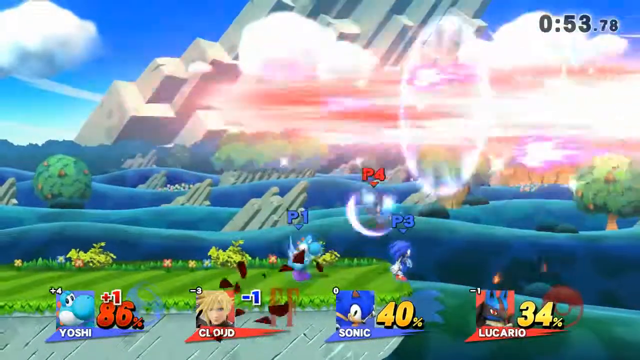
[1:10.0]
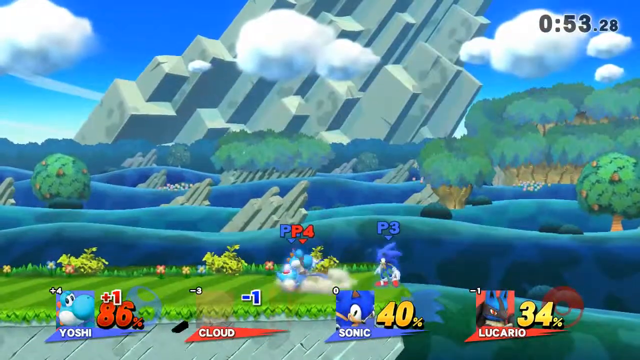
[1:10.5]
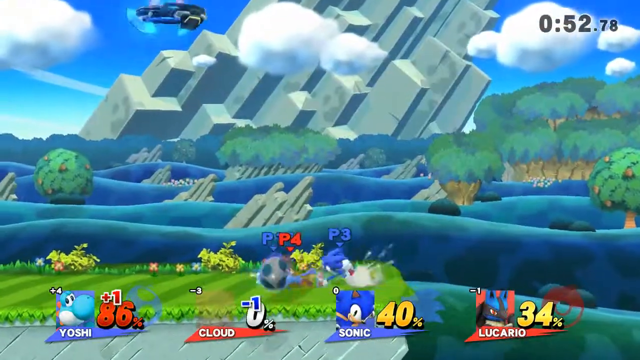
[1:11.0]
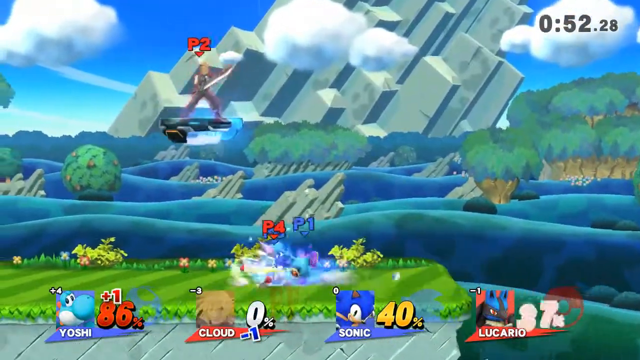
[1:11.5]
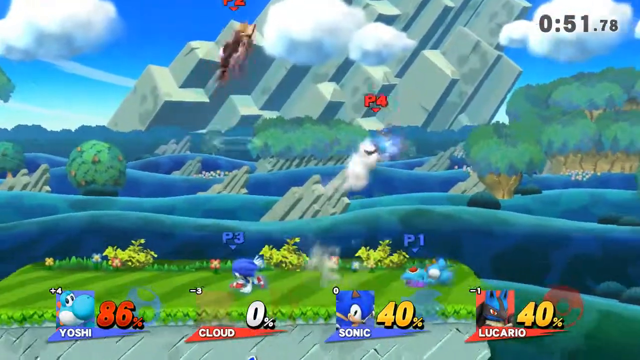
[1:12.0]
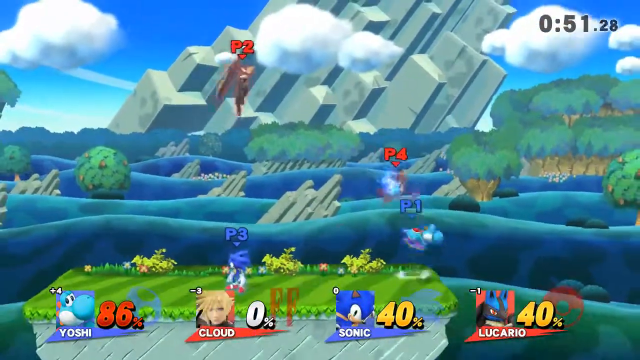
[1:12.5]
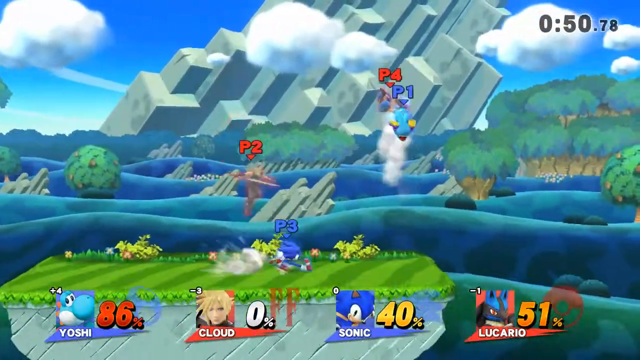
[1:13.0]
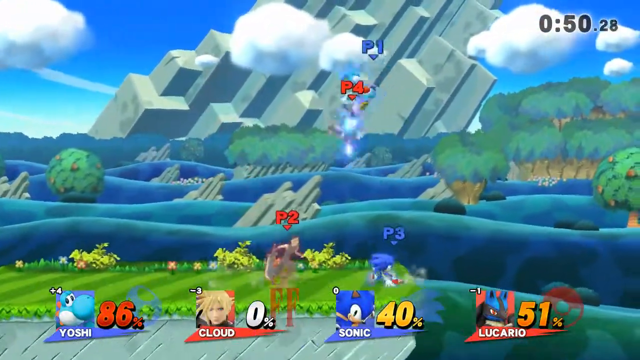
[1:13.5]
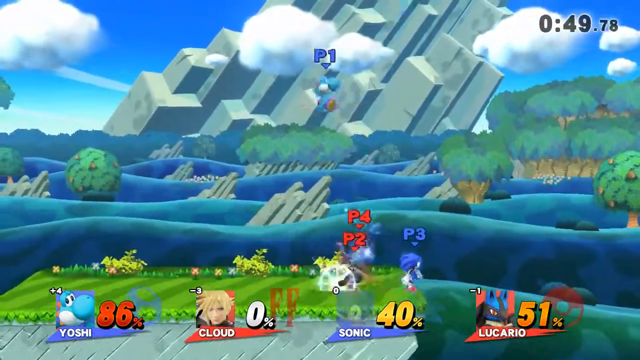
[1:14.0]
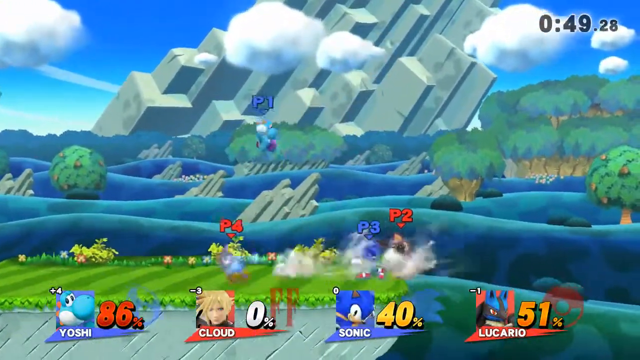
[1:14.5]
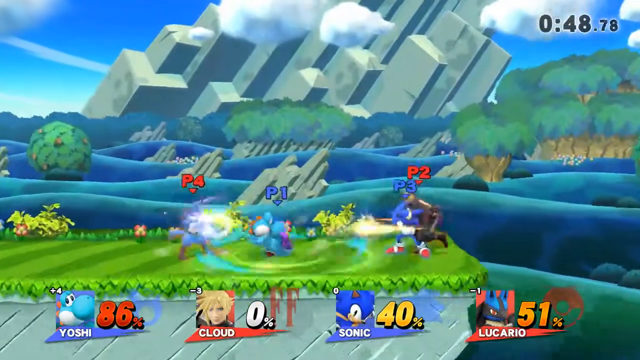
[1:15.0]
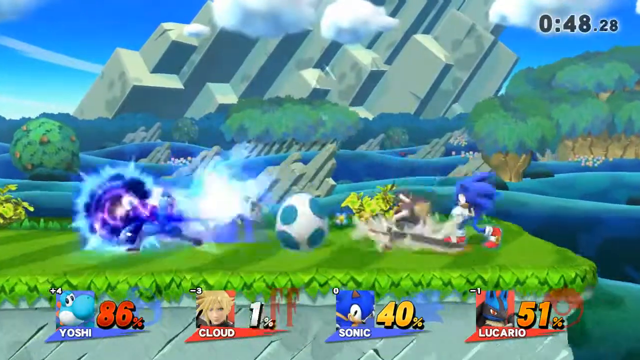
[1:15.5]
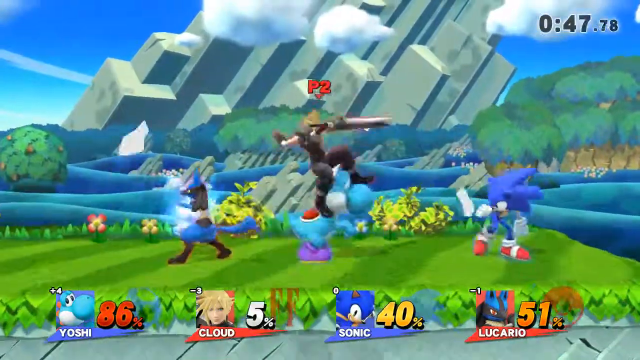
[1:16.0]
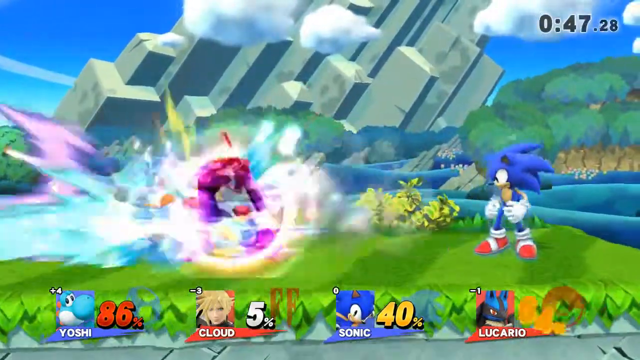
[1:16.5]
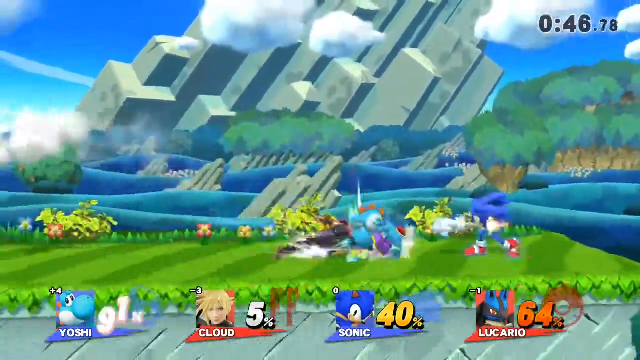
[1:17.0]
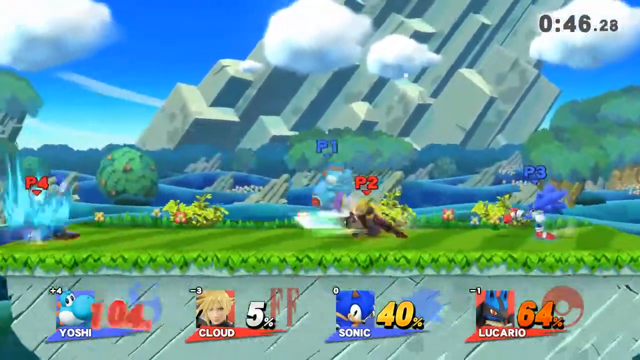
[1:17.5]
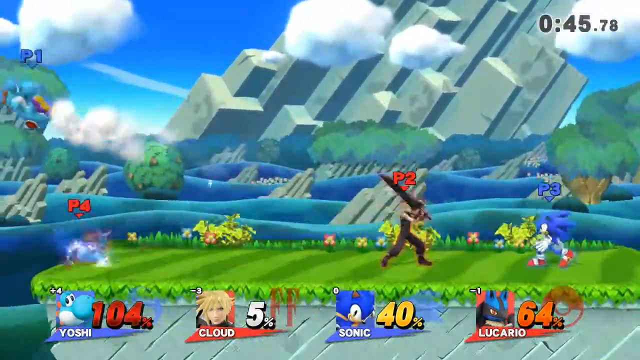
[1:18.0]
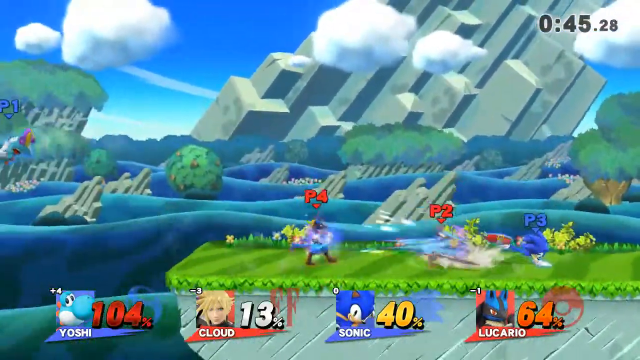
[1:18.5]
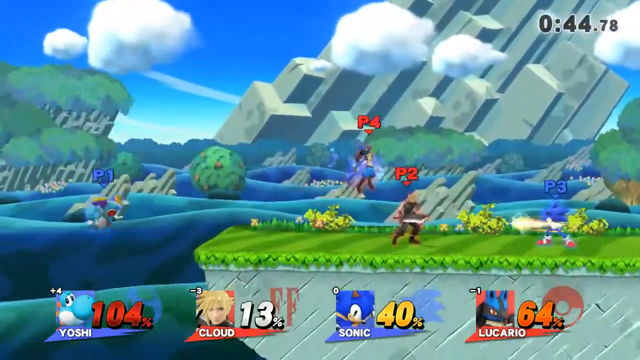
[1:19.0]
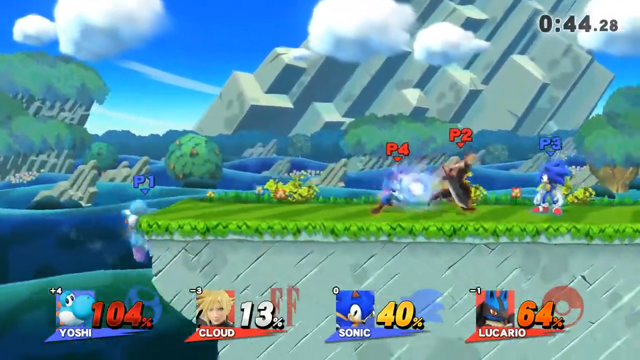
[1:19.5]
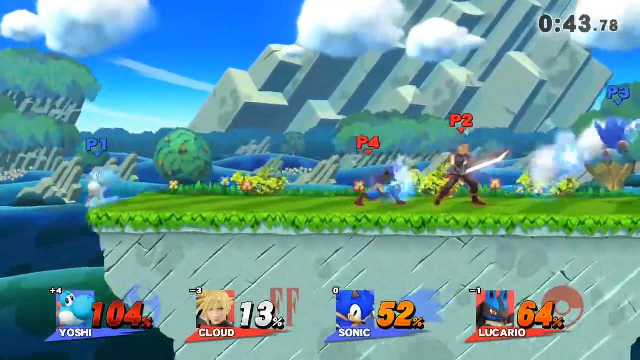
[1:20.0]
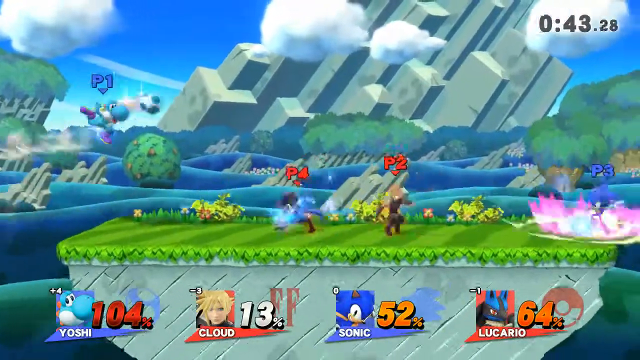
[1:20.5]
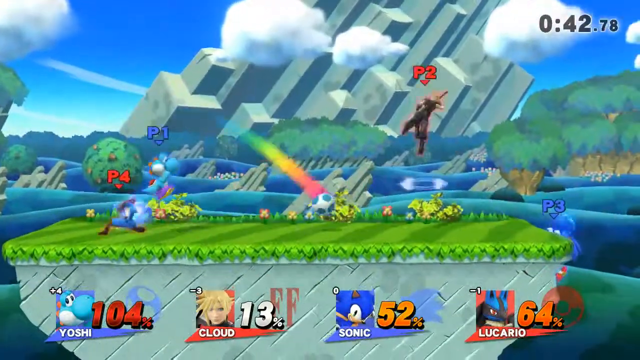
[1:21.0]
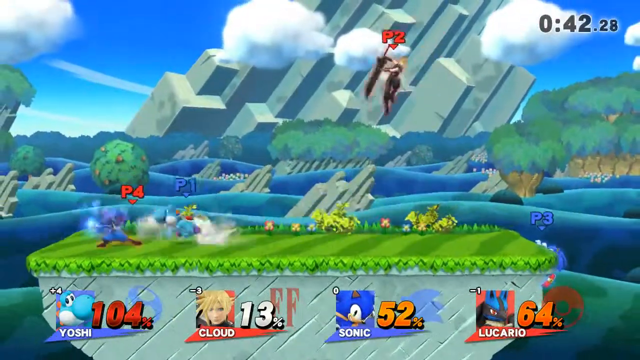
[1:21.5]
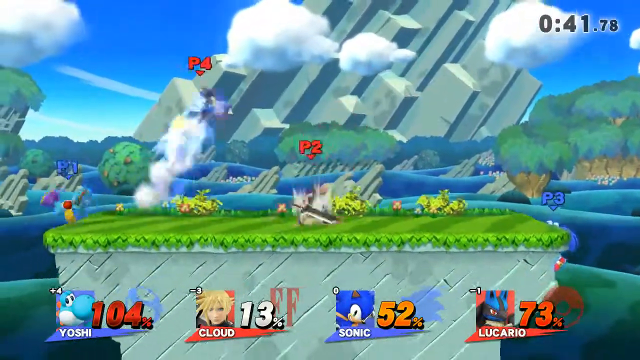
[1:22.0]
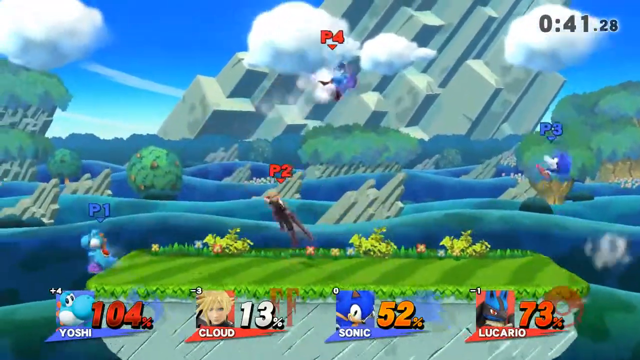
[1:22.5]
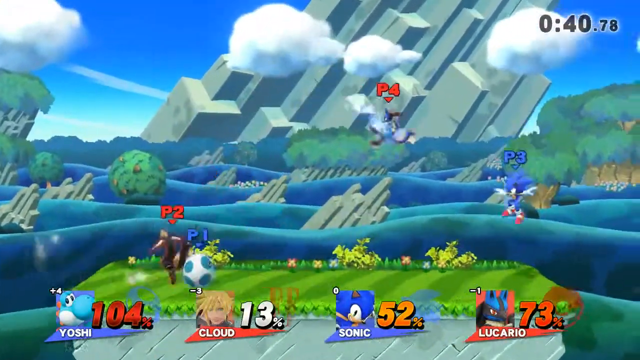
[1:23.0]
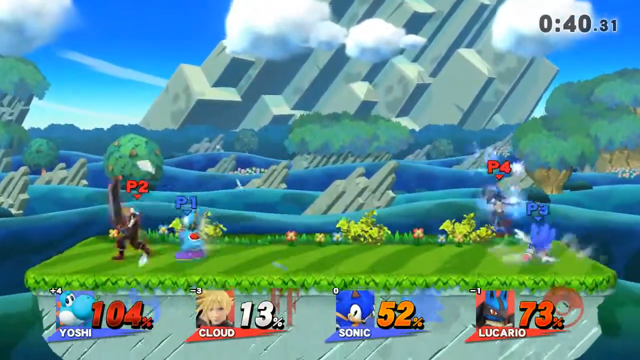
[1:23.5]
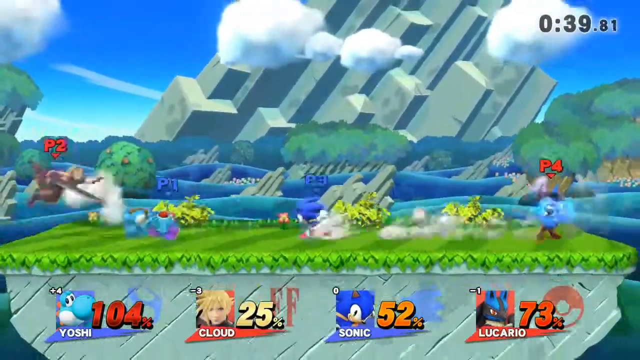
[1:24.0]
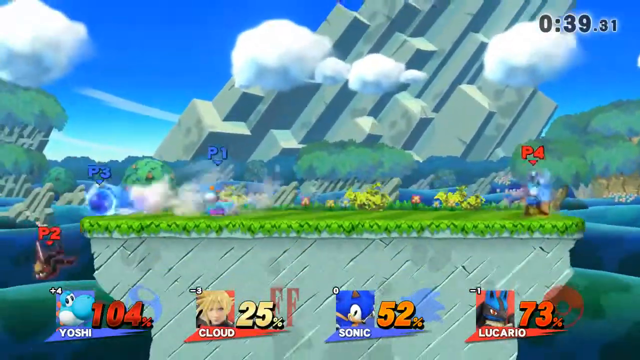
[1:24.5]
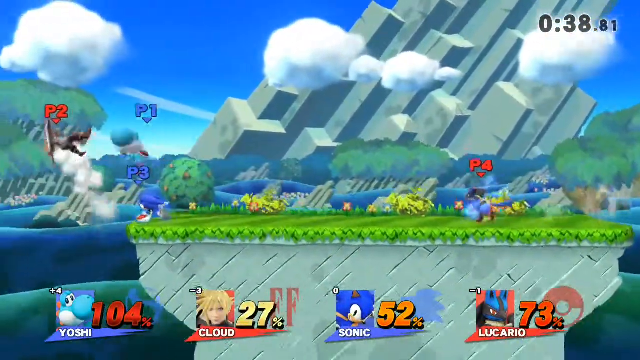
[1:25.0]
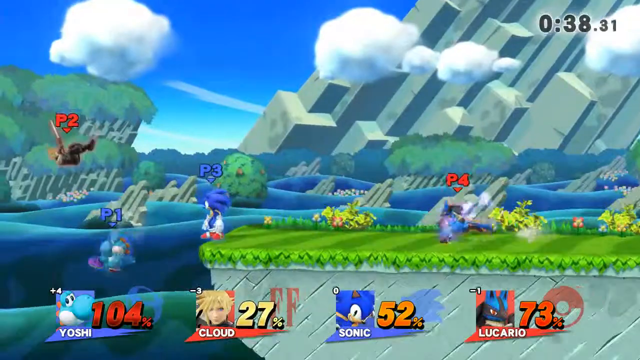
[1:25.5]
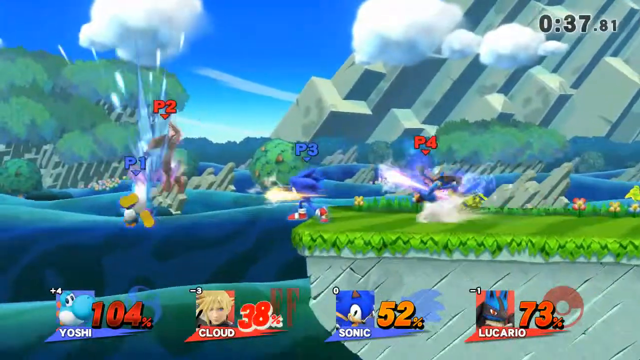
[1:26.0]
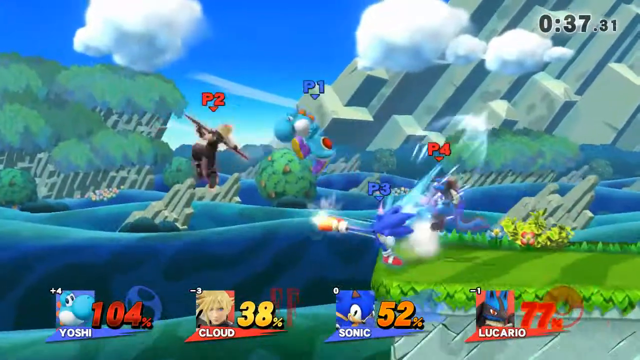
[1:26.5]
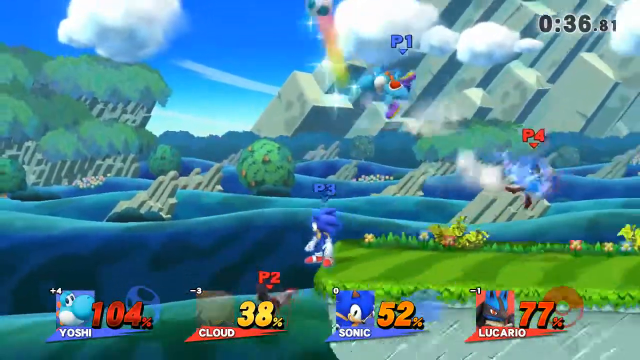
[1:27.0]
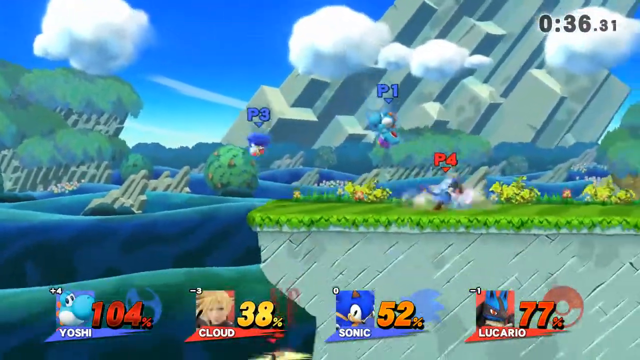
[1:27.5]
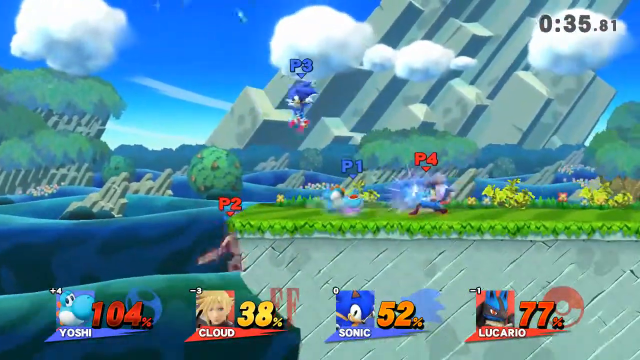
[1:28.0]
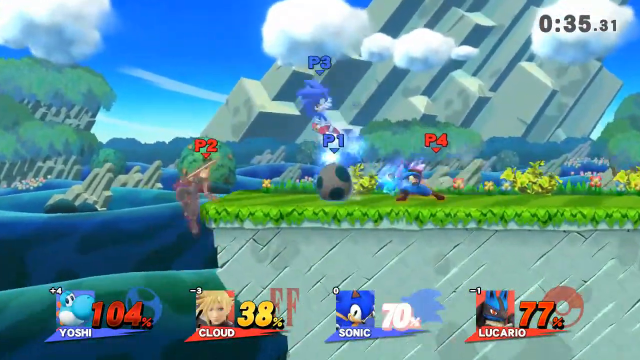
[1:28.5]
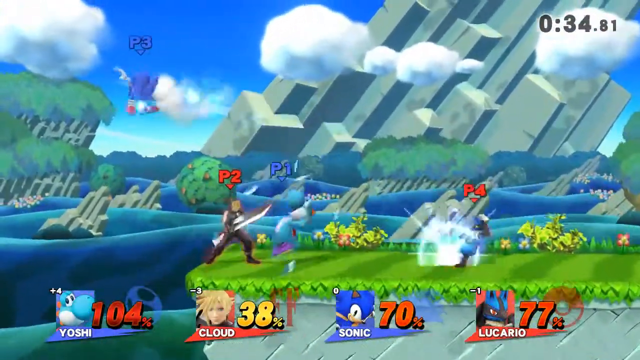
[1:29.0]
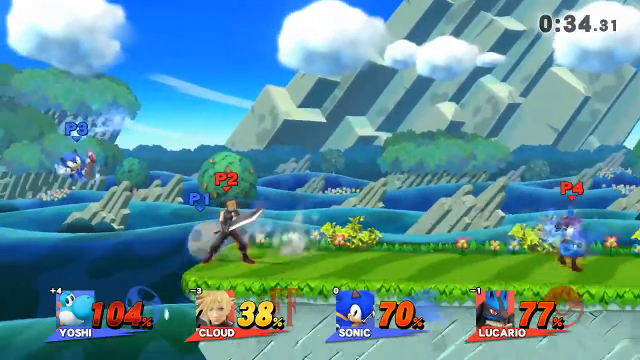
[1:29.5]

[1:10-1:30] With 53 seconds remaining, Yoshi is at 86%, and Cloud's score apparently resets to 0 after he is pushed off the cliff; Sonic and Lucario are both at 40%. Cloud almost falls off a second time but catches himself and climbs right back up onto the little platform. Yoshi and Sonic are each almost knocked off but catch themselves; Yoshi nearly goes off twice and pushes himself up off one of the red team's bodies, probably Cloud's.